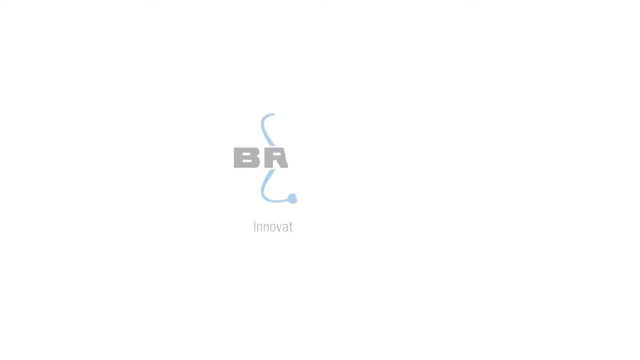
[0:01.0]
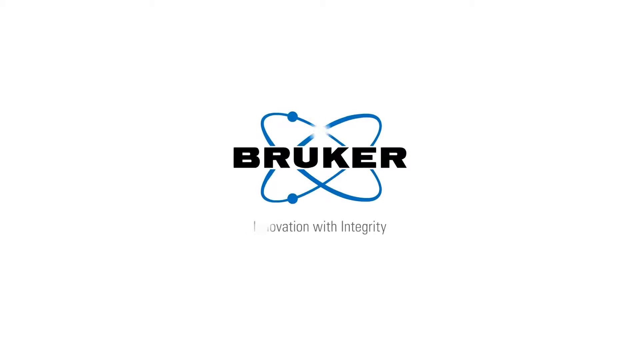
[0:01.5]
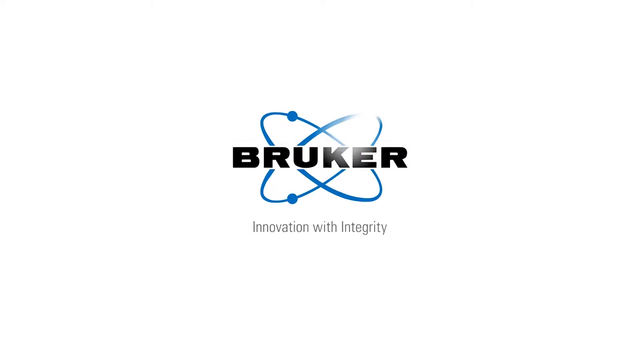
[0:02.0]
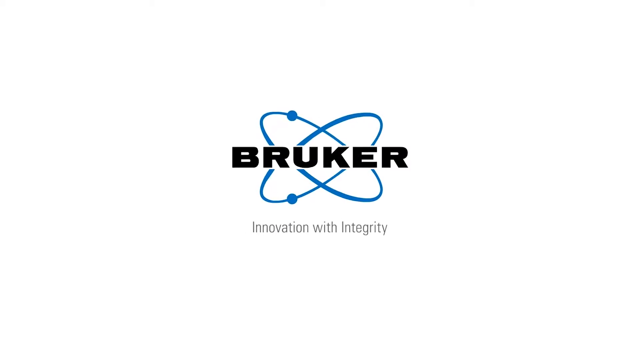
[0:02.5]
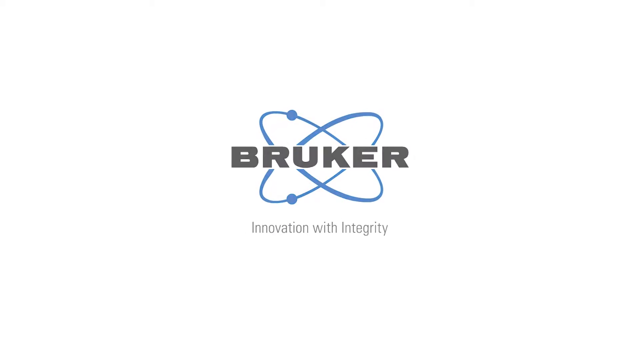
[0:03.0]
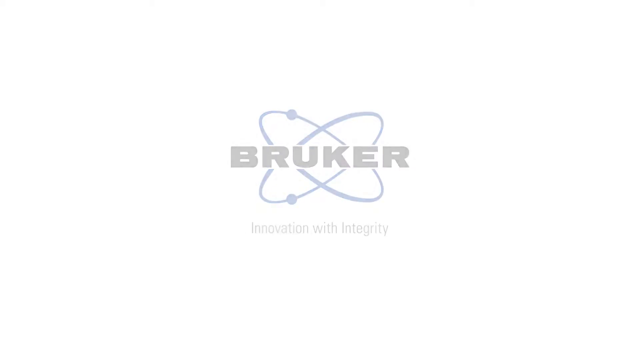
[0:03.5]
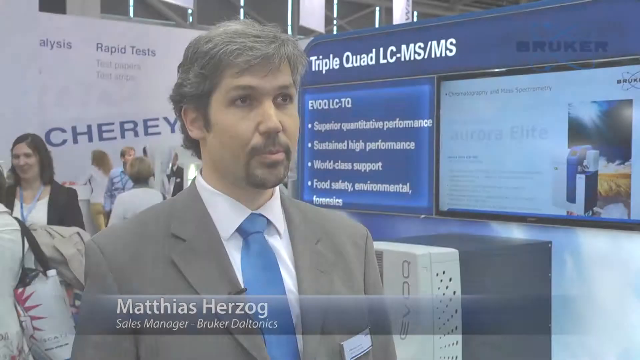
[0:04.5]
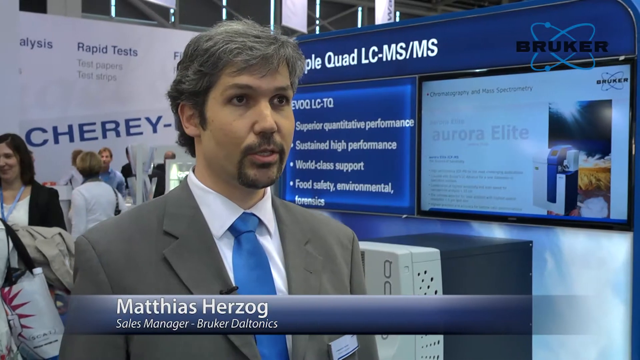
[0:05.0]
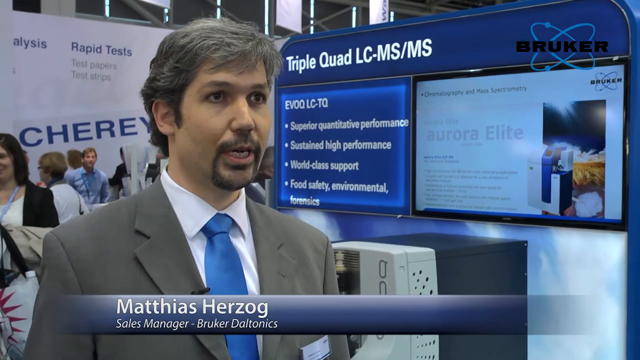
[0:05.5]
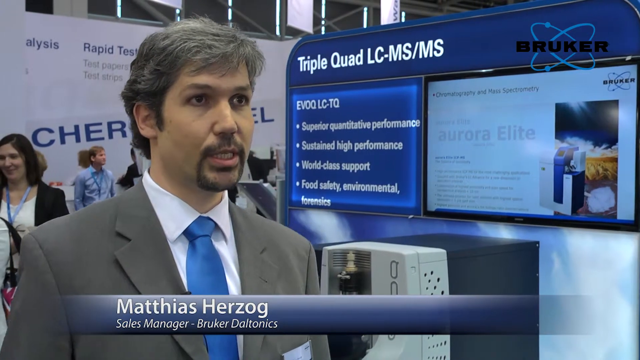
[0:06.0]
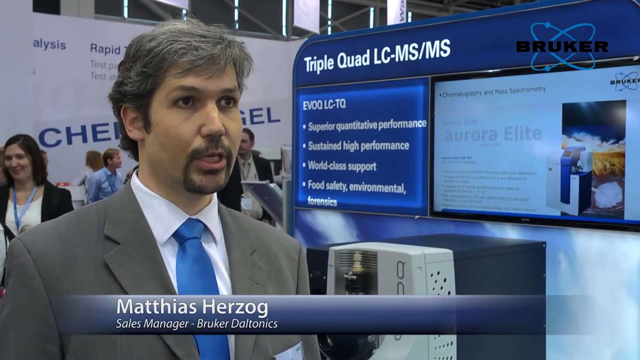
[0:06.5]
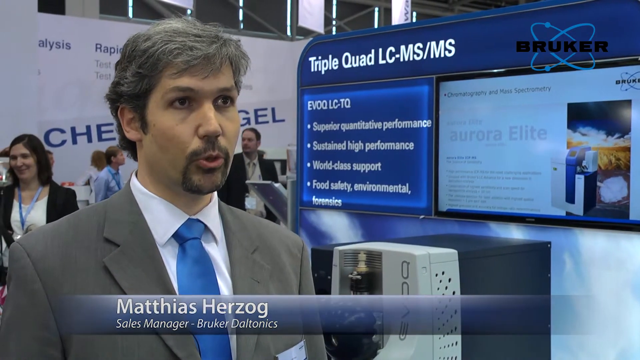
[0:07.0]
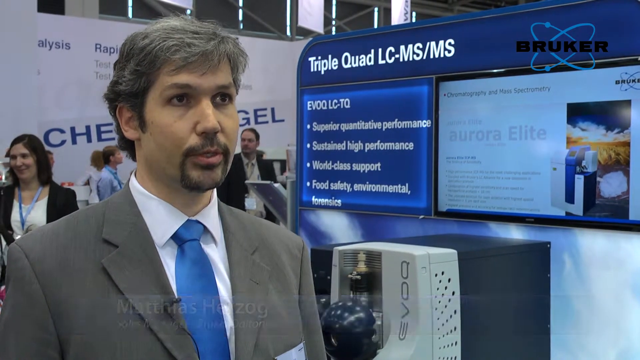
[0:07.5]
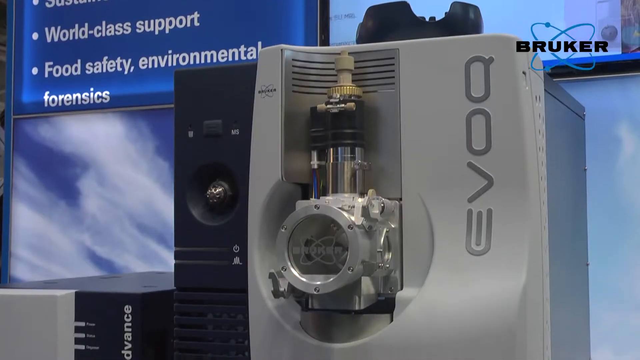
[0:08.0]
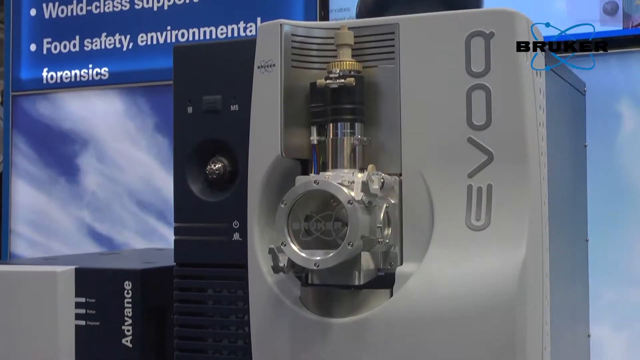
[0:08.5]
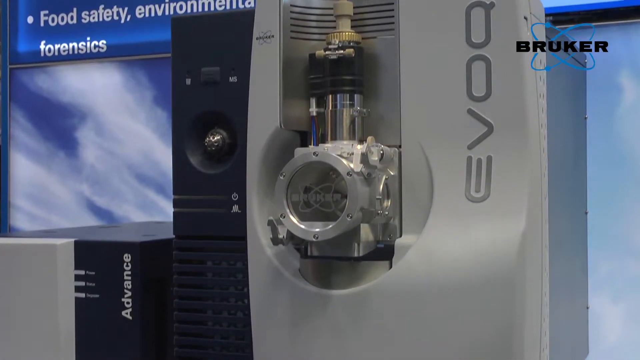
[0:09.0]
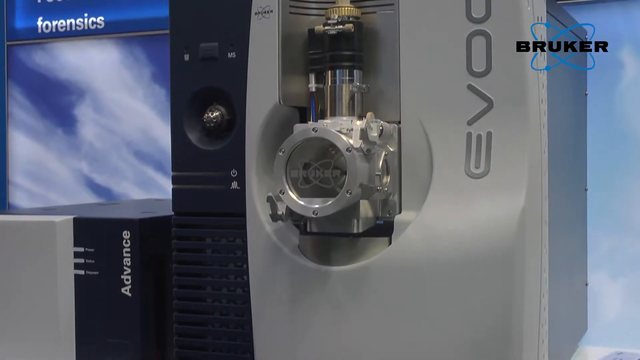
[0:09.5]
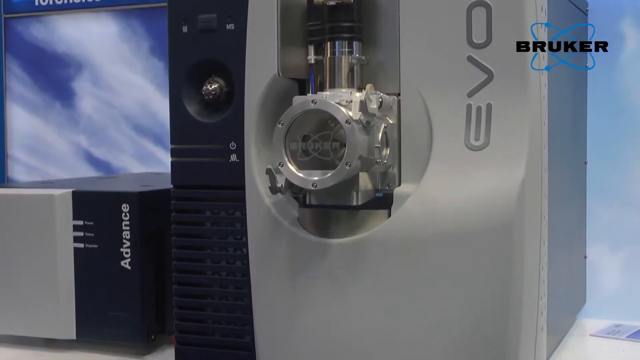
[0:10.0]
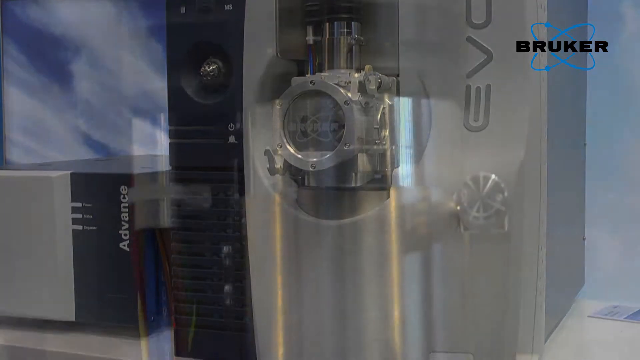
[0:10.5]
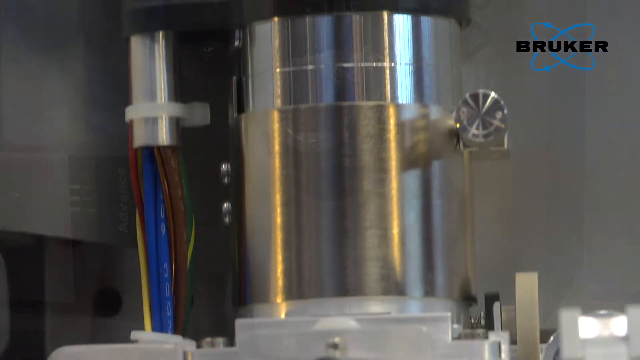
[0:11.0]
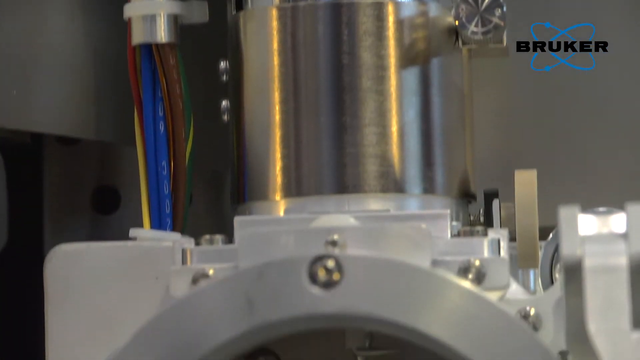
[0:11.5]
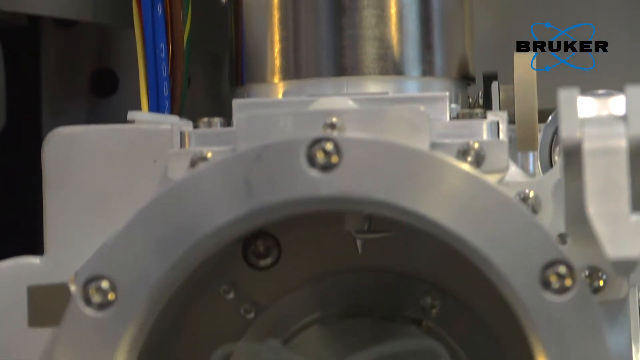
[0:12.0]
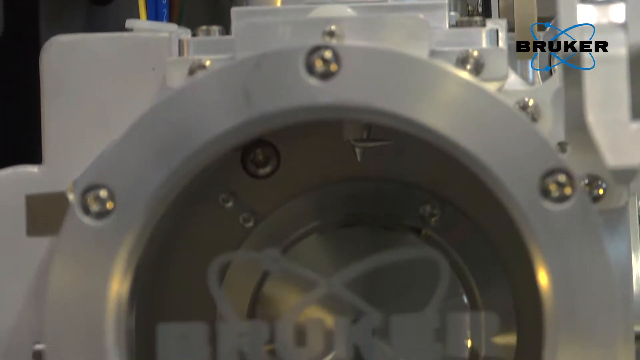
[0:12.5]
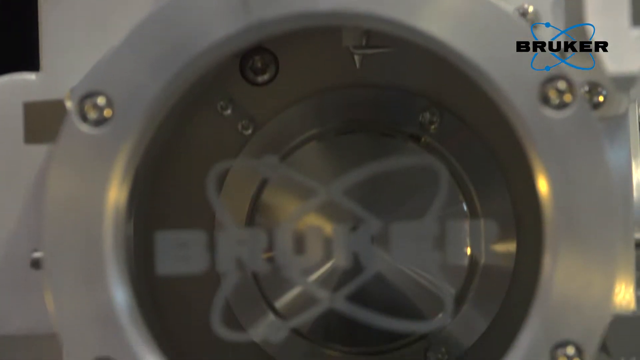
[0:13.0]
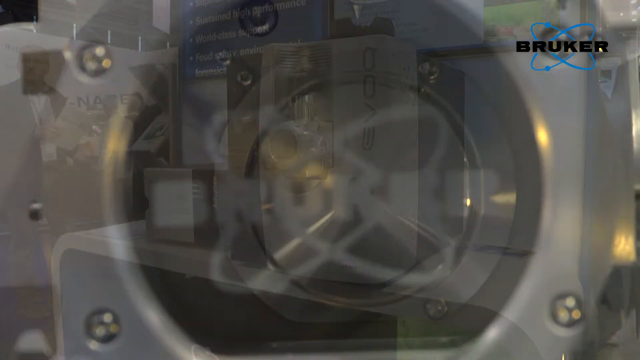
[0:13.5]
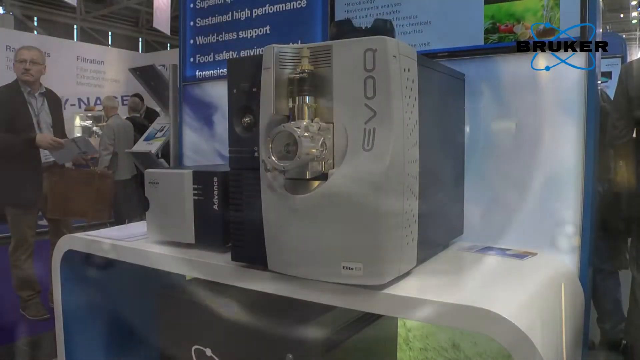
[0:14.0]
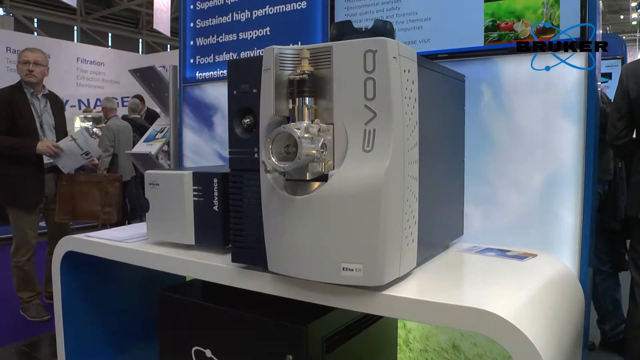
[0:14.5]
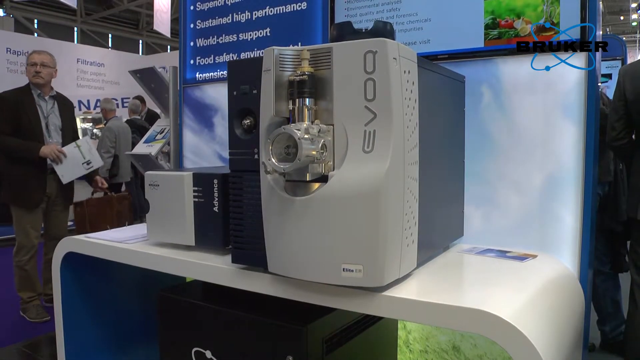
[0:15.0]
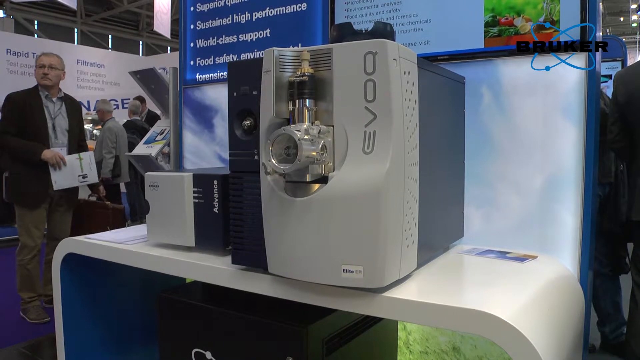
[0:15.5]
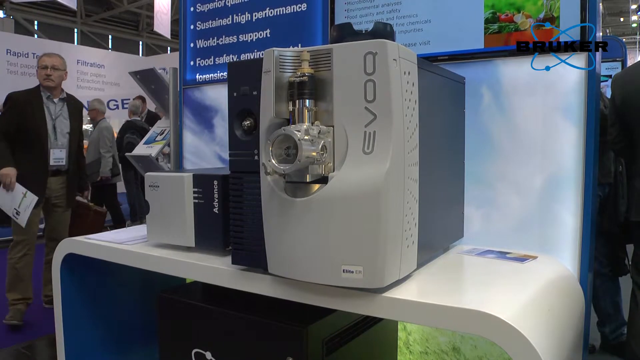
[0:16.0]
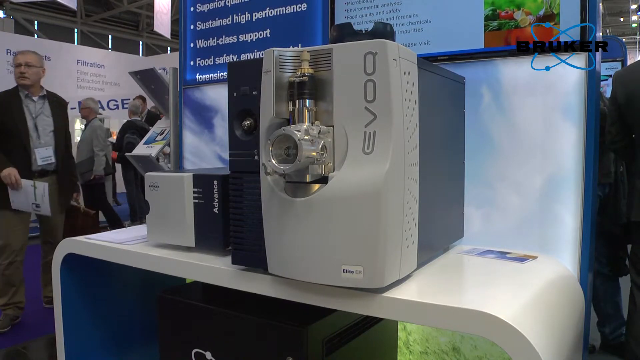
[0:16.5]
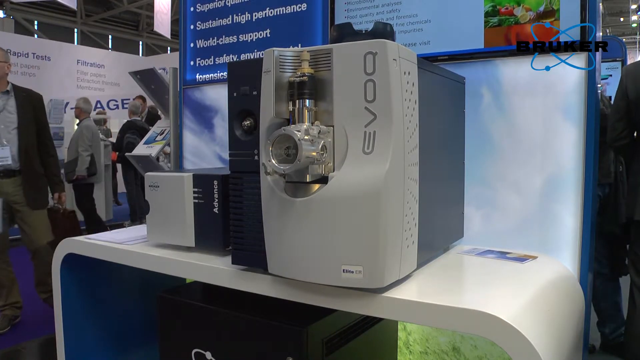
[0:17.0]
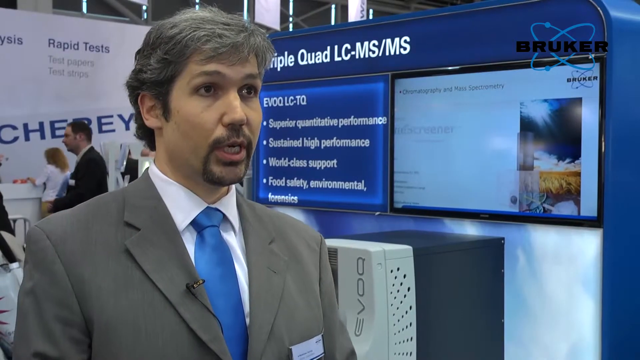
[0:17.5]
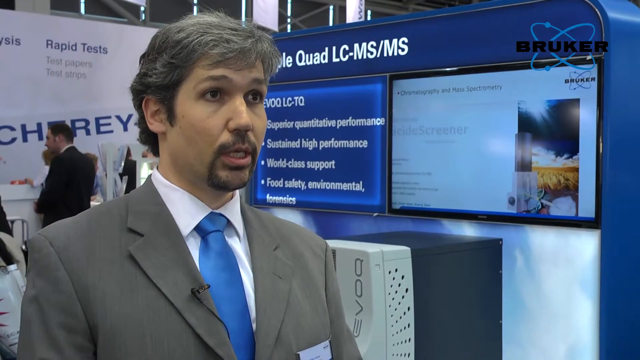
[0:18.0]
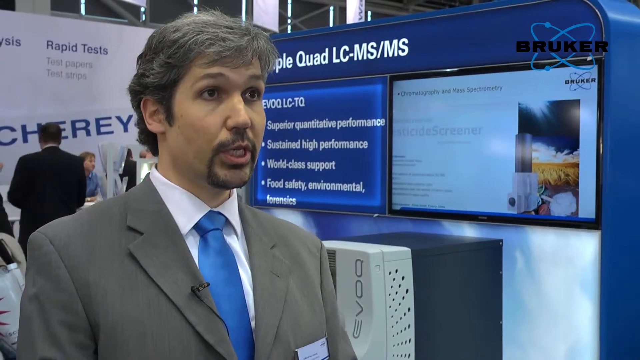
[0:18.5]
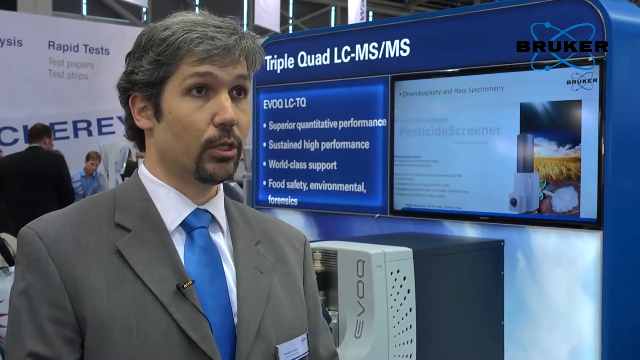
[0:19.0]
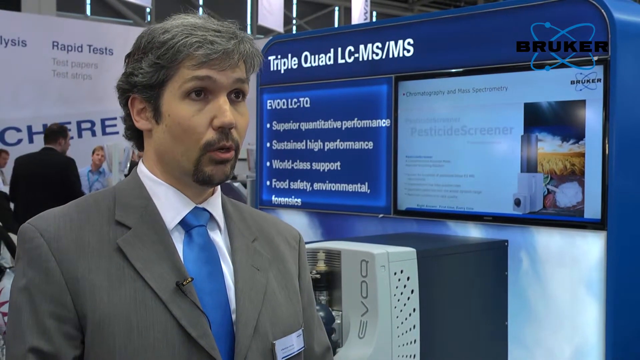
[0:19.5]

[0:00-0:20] The screen starts white, and then a logo appears reading "Bruker" and "Innovation with Integrity," with two items circulating on a path. A man then talks to the camera. He wears a gray suit, a white shirt and a blue tie, and he has gray hair and a beard. A label beneath him reads "Matthias Herzog, sales manager at Bruker Deltonics." The camera moves from him to a piece of machinery, focused on a valve in the center as it pans down. It zooms in on the valve and stops over the Bruker logo, then zooms out to show the machine from afar. The setting is a convention center with people walking around and the machinery on display. In the background are points such as "sustained high performance," "world-class support," "food safety" and "environmental forensics." The camera pans back to the man talking.